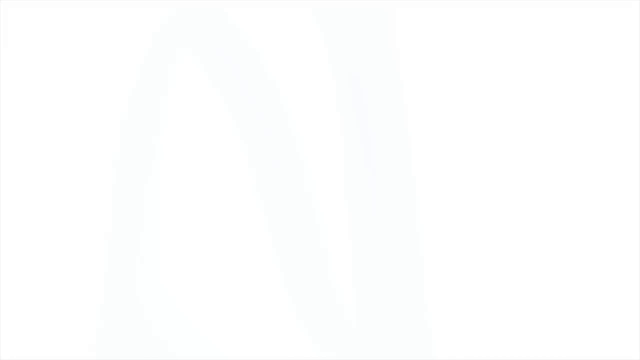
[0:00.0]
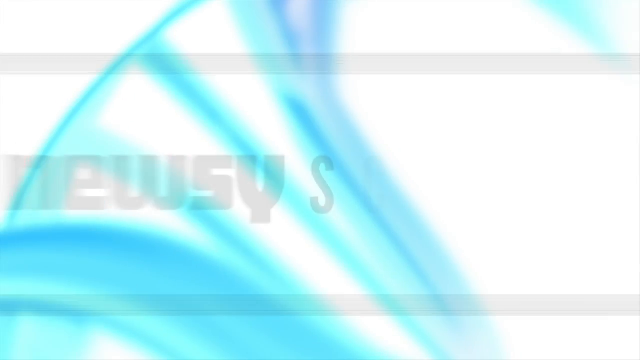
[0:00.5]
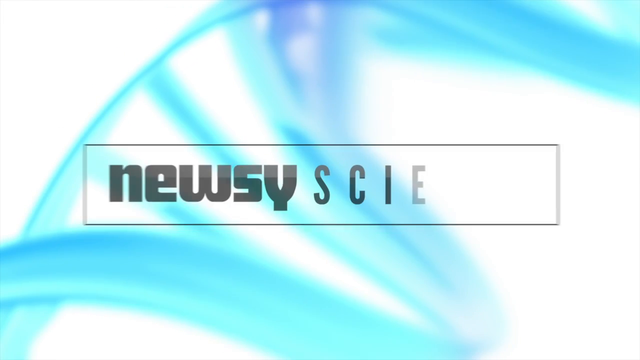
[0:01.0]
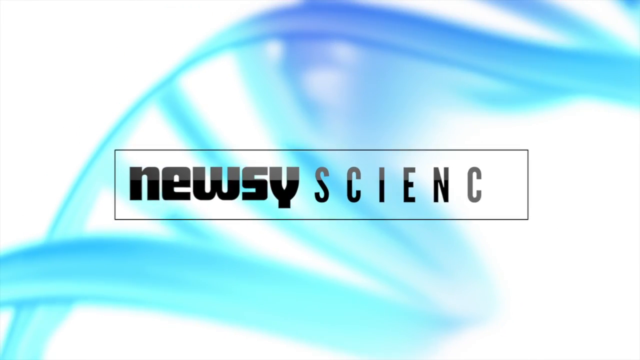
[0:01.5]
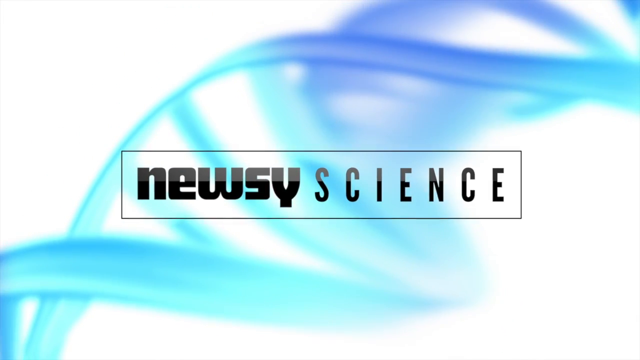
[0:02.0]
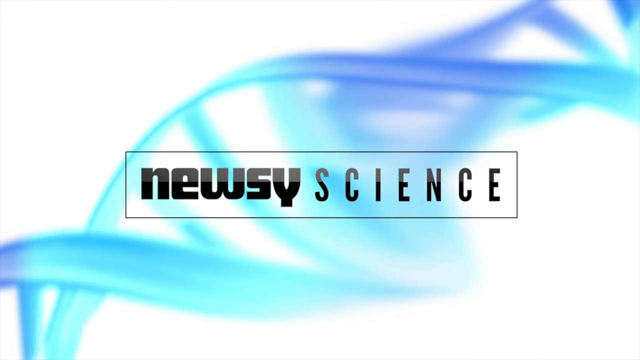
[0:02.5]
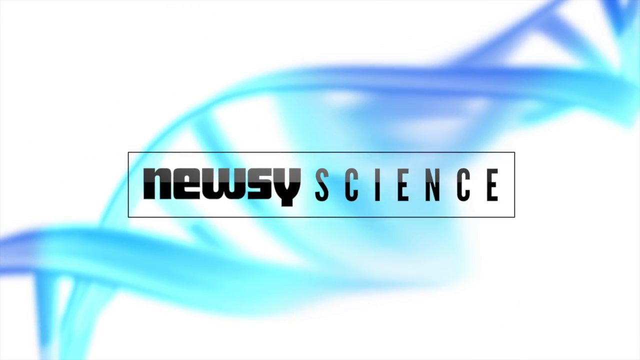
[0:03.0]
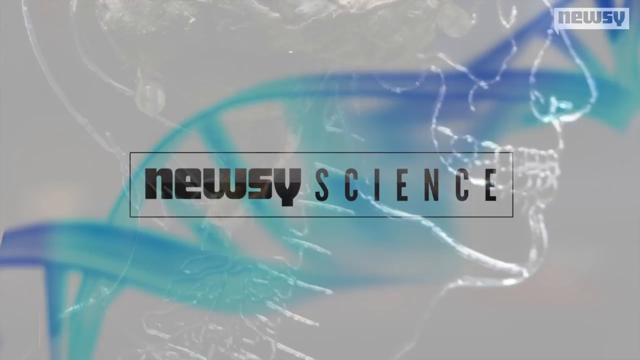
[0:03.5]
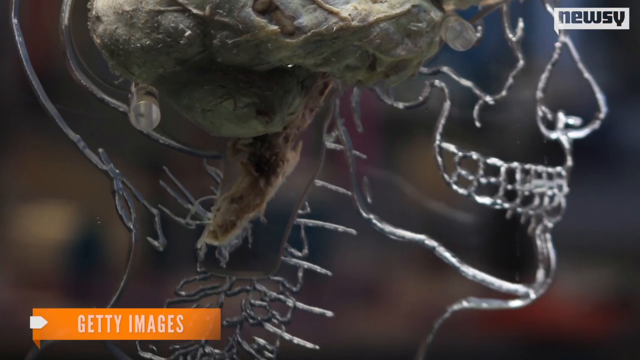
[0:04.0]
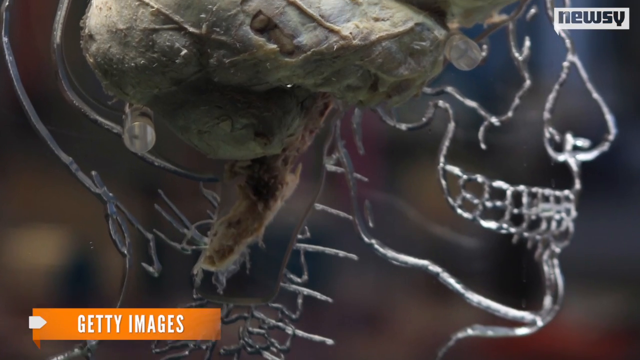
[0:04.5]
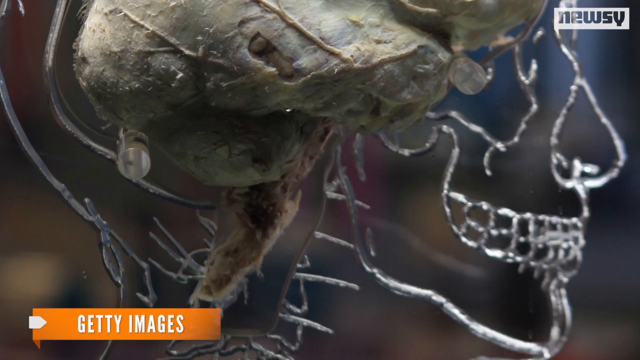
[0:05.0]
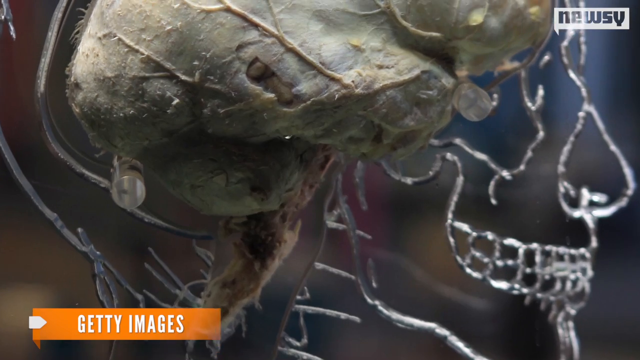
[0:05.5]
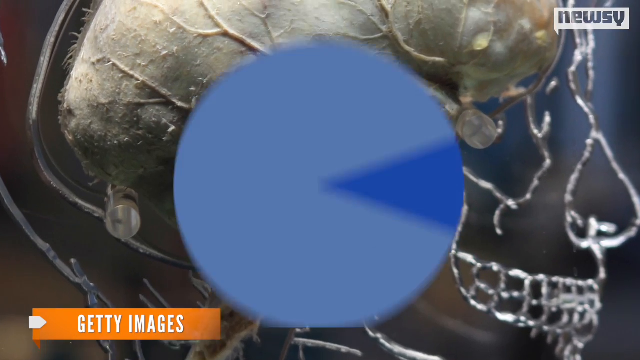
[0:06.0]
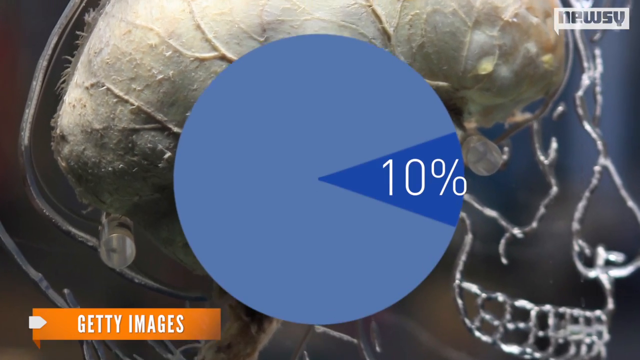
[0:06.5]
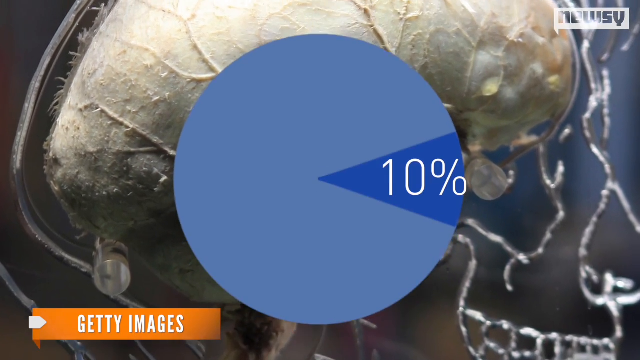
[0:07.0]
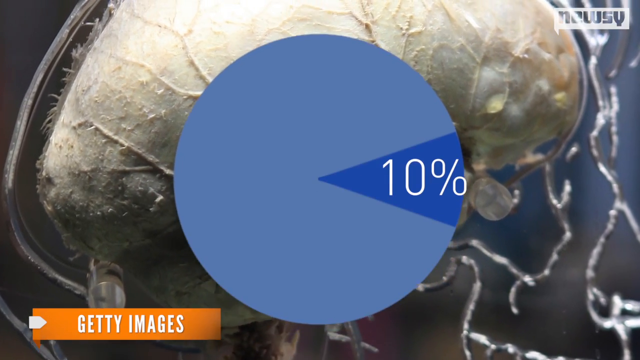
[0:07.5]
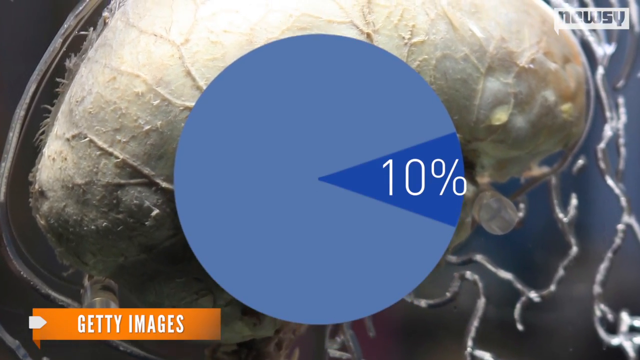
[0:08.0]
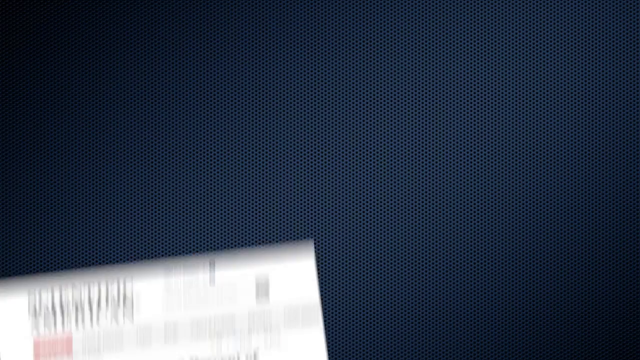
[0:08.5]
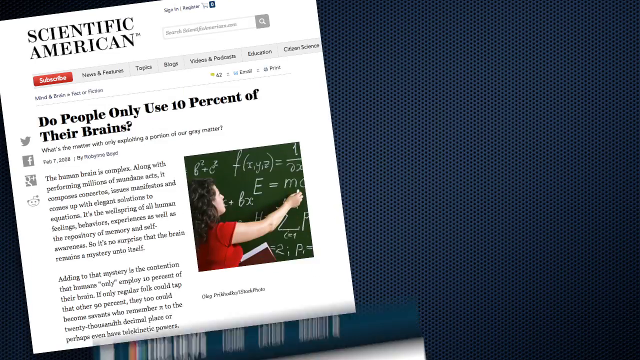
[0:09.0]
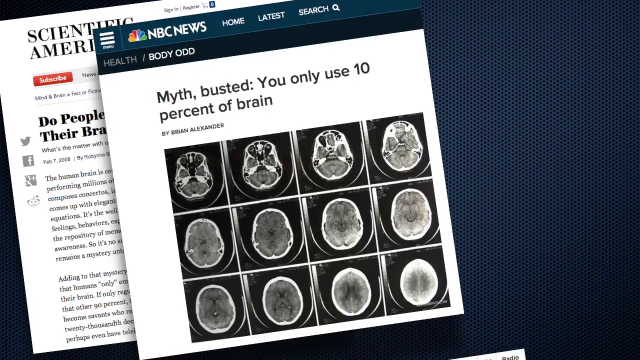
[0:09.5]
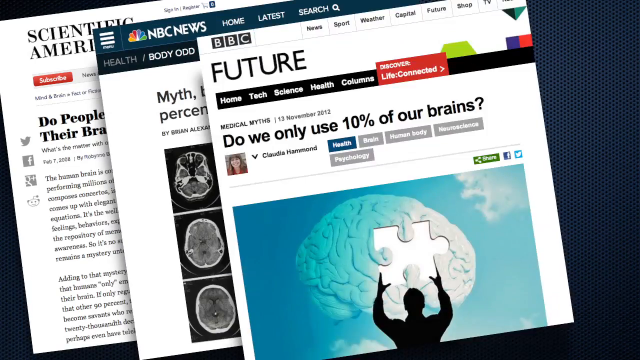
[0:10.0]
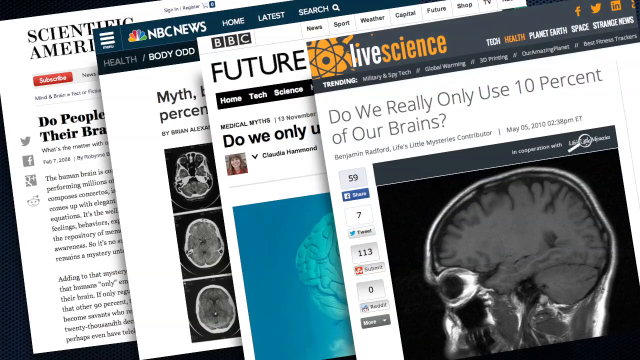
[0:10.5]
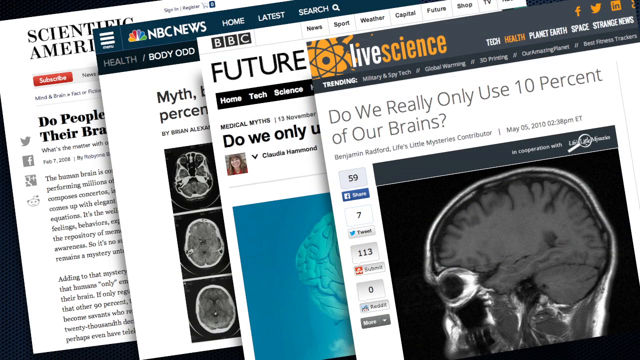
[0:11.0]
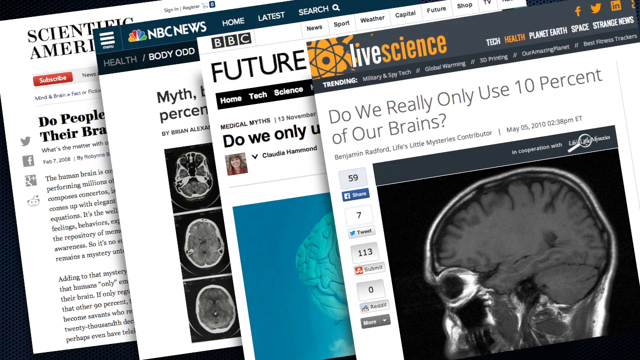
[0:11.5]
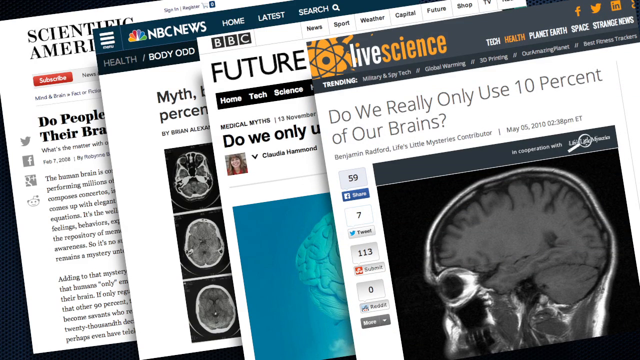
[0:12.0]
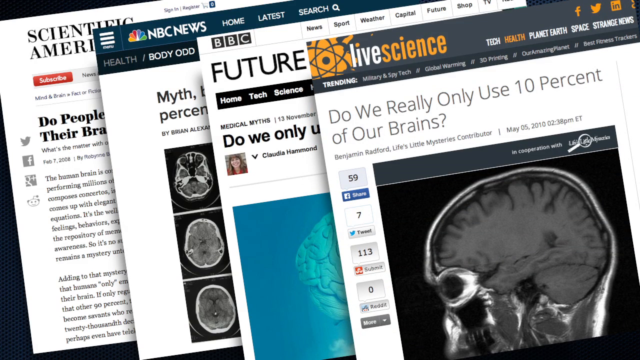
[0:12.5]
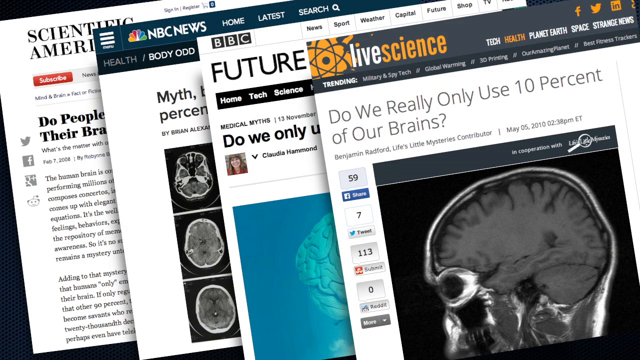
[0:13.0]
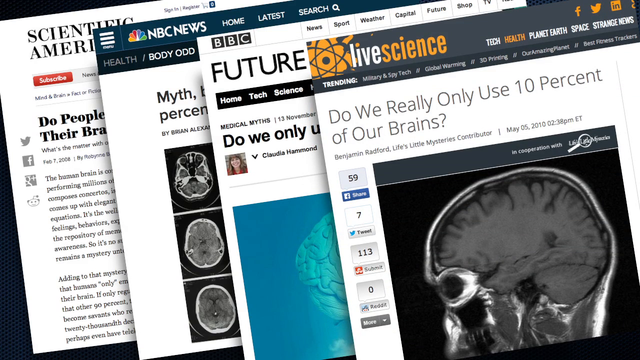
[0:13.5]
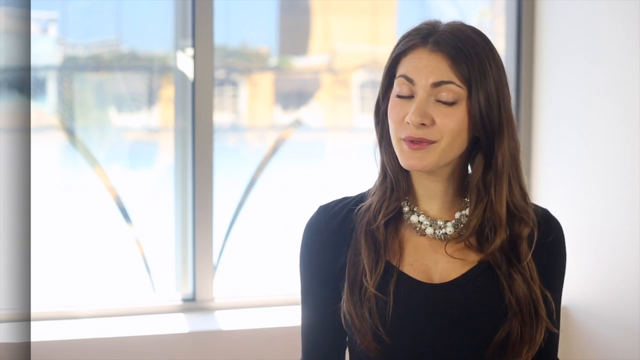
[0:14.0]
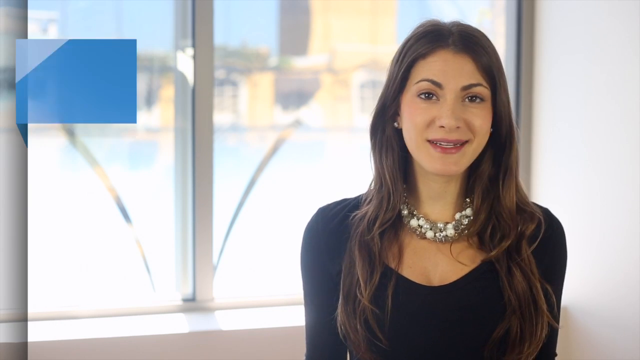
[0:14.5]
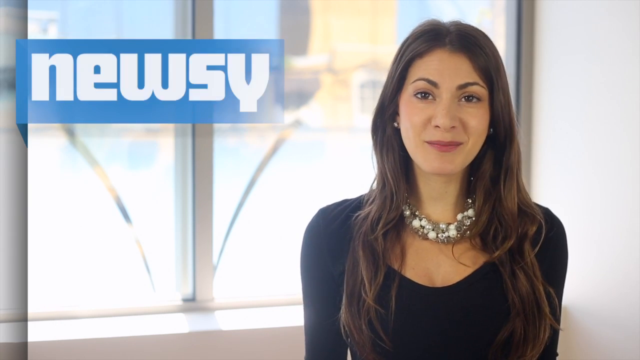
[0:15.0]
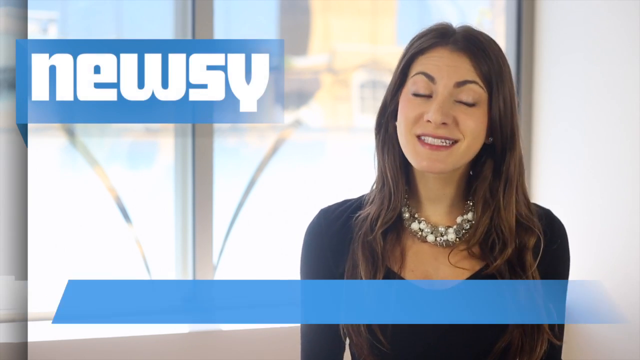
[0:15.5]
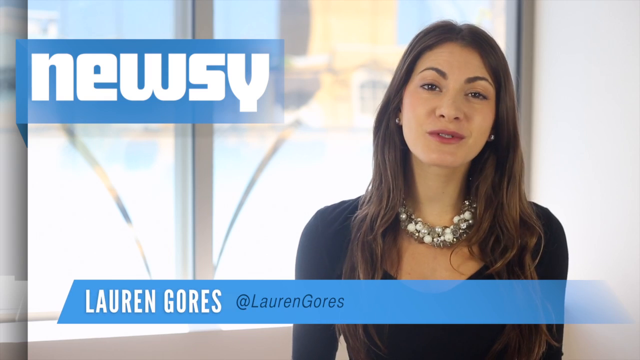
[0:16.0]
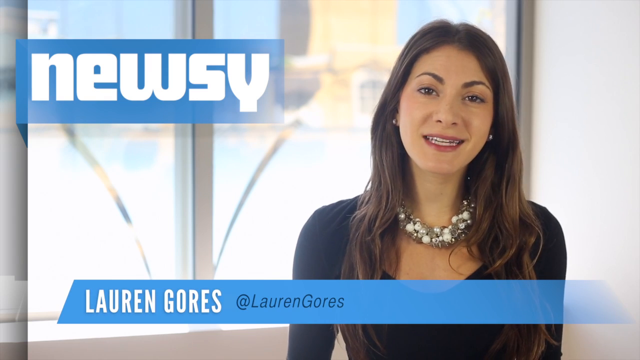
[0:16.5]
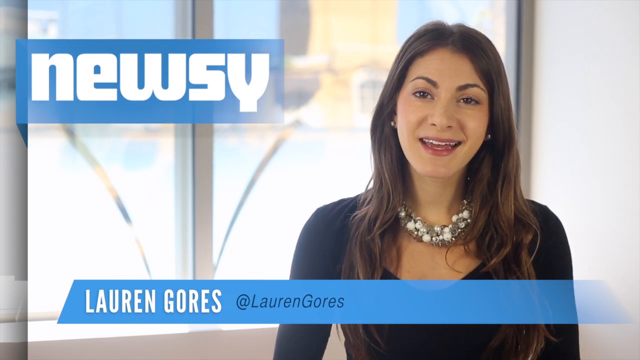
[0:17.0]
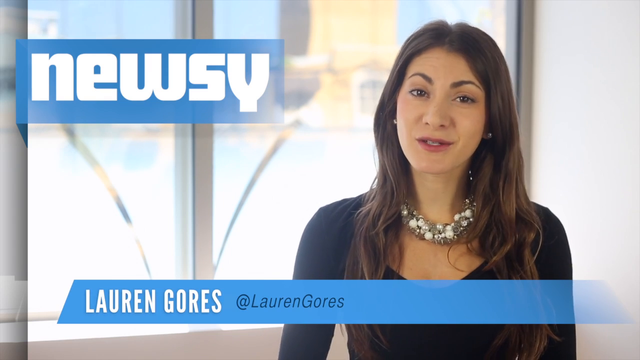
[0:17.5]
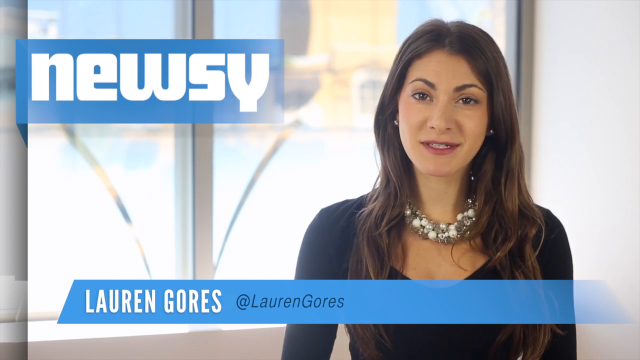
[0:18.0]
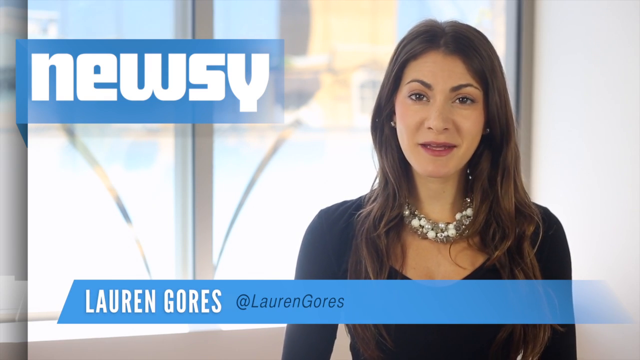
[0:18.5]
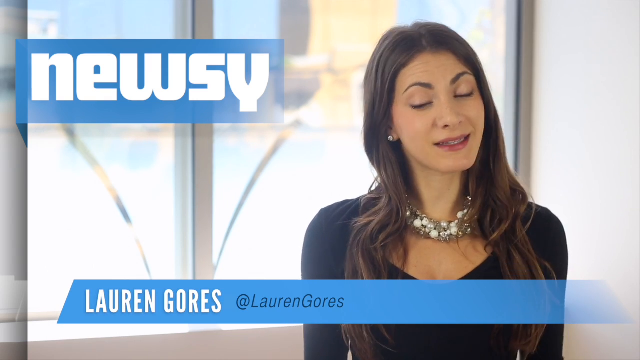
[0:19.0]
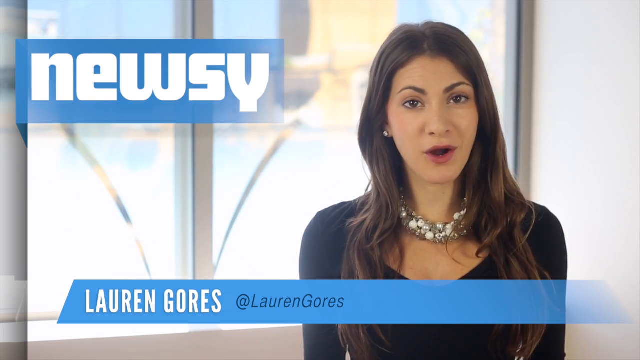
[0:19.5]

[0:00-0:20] The video opens with a "Newsy science" title: the word "Newsy" suddenly appears in bold black text, with the word "science" in smaller, narrower text, also black. In the background is what looks like a swirling piece of DNA in light blue, dark blue and white. An image of the human brain follows, and as it zooms in, the veins of the brain become visible. A blue circle pops up with the number 10 and a pie cut on its right side. Four publications then pop up one at a time from left to right: Scientific America, NBC News, Future by BBC, and Live Science on the right side. Clips showing the story follow, and the video goes to a female newscaster, Lauren Gores, who appears to own the channel. The video then focuses on Michael J. Fox. Four articles pop up on the screen while she is speaking.